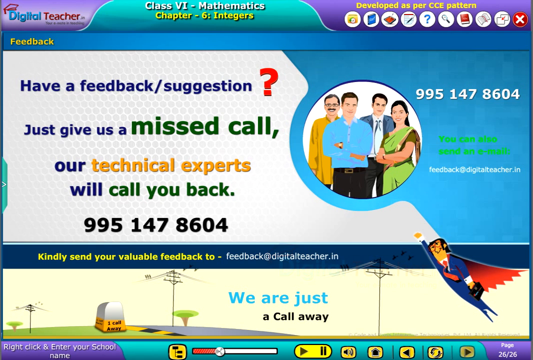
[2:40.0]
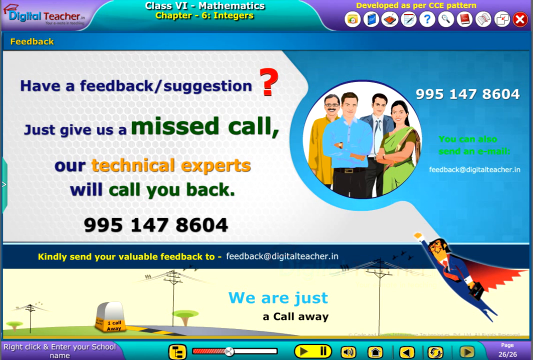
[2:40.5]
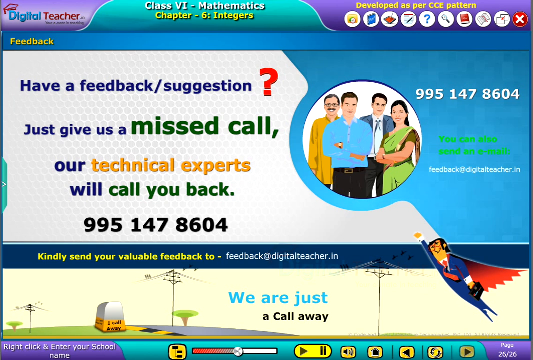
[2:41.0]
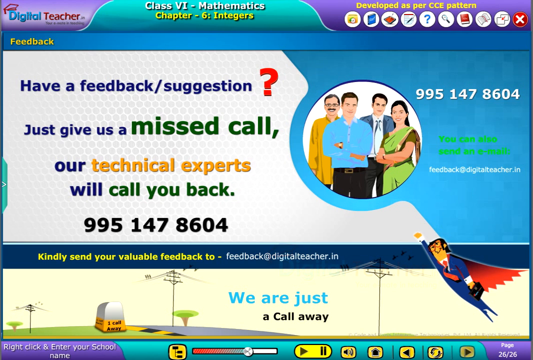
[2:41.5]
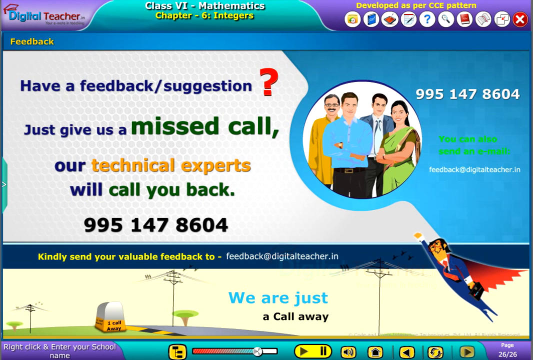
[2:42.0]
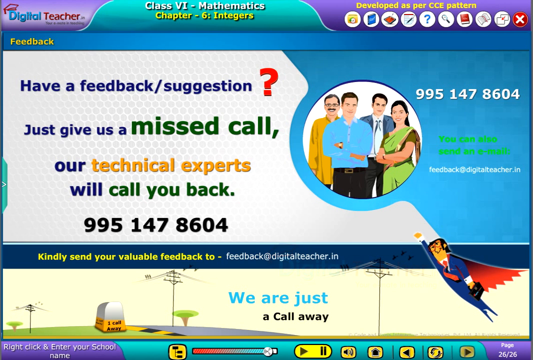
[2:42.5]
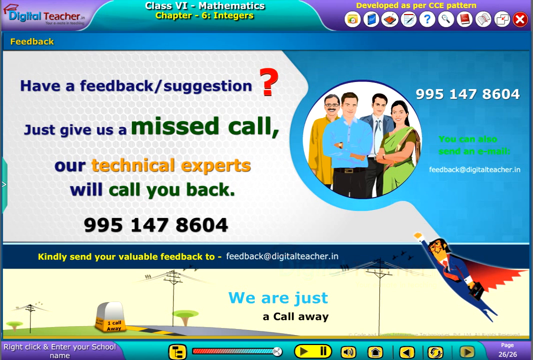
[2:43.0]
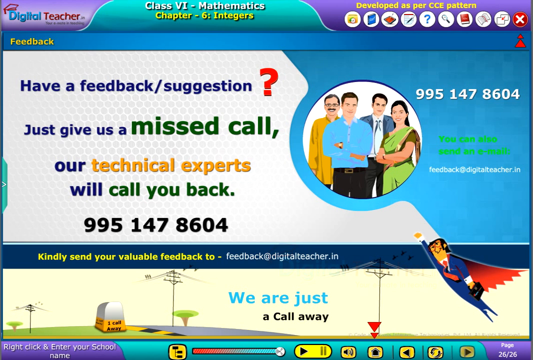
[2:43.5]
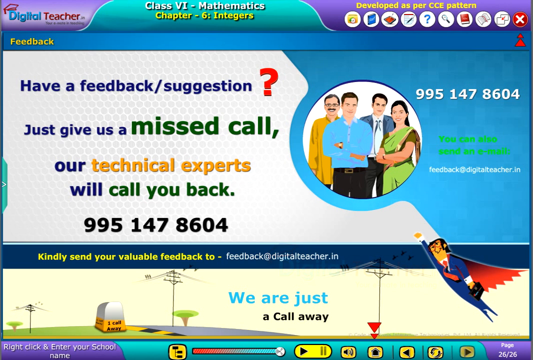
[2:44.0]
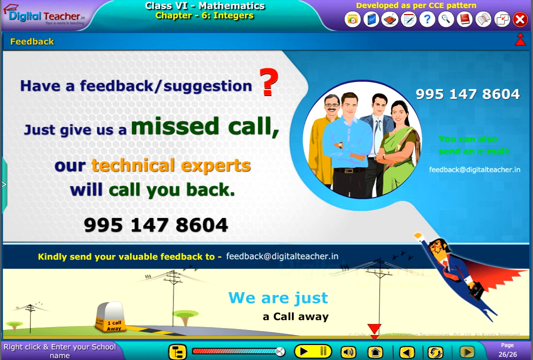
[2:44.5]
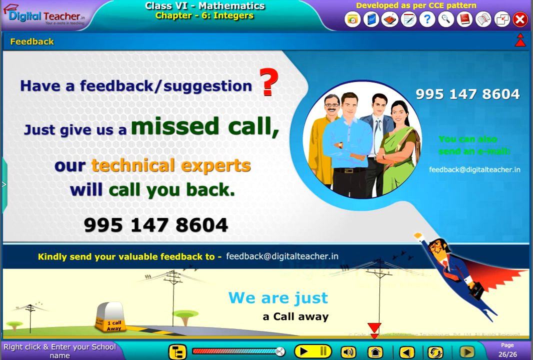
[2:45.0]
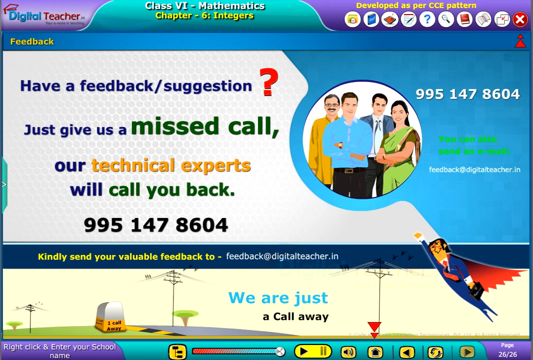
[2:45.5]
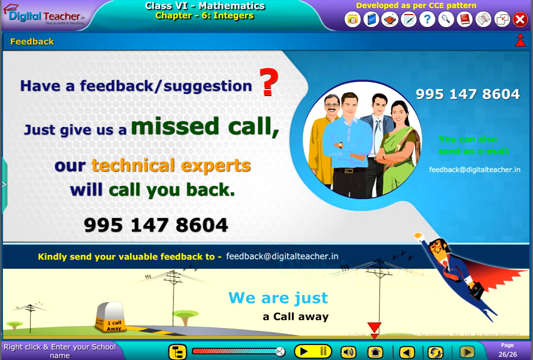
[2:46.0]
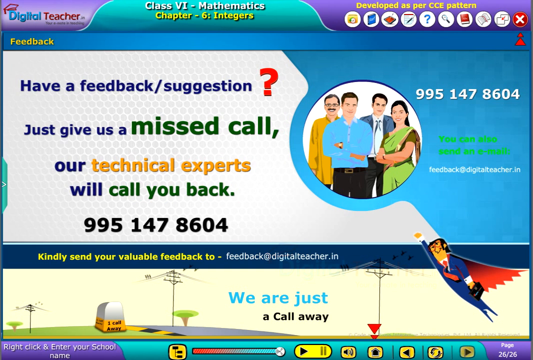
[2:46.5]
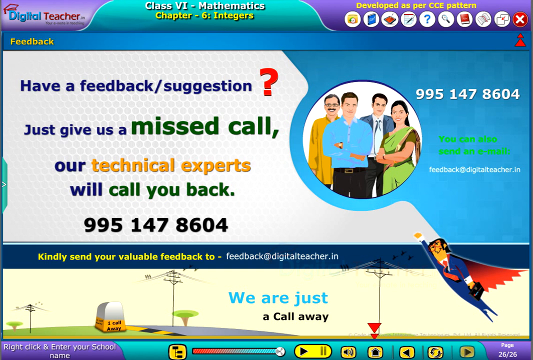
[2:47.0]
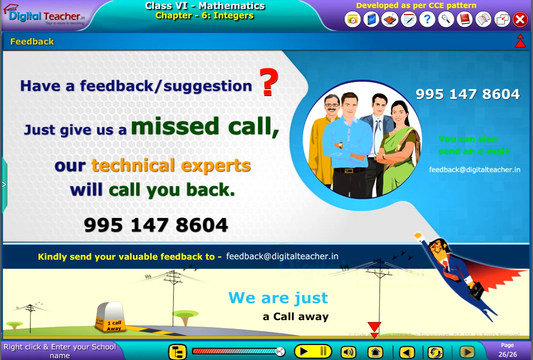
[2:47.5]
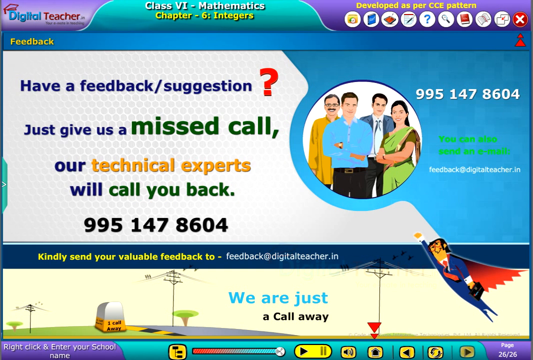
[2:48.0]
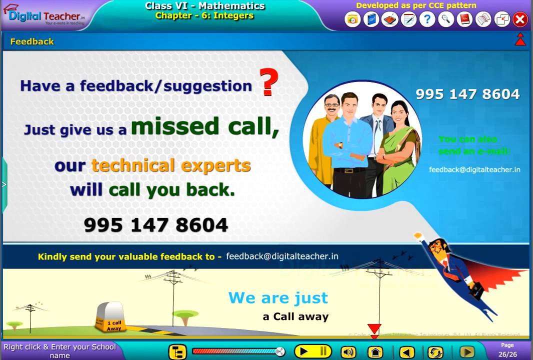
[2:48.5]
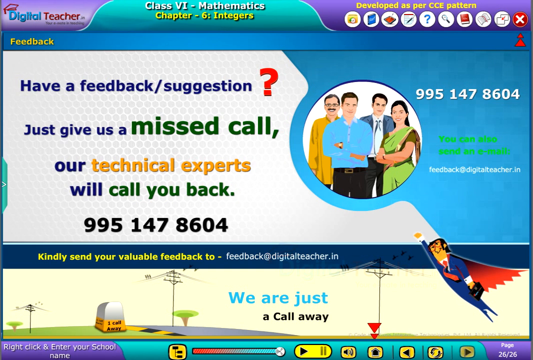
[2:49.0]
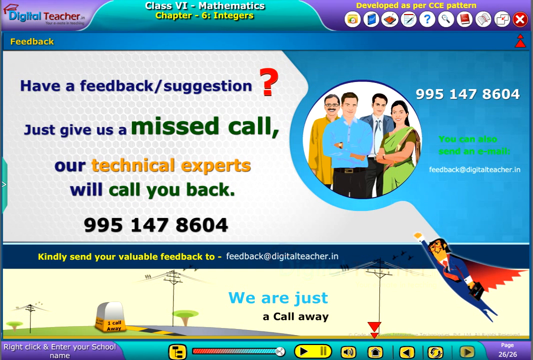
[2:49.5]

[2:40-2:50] The feedback page opens, similar to the screen at the beginning. It says "have a feedback / suggestion" with a big red question mark next to it. Below that it says "just give us a" followed by "miss call," in big green text; below that "are" followed by "technical experts" in yellow text; and below that "will" followed by "call you back" in green text. Then there is the number 995-147-8604. This is on a gray panel, and to its right is a blue panel cut off by a diagonal line running from top left to bottom right. Between the two panels is a family, or four people, in a circle. Next to the circle is the same number again, green text saying "you can also send an email", and the email "feedback@digitalteacher.in". At the bottom is a banner that says "kindly send your valuable feedback to feedback@digitalteacher.in" and also says they are just a call away.